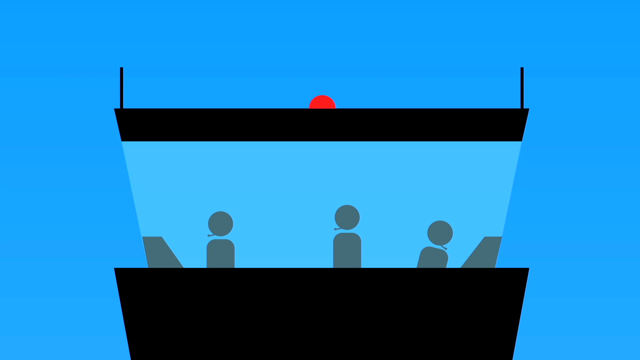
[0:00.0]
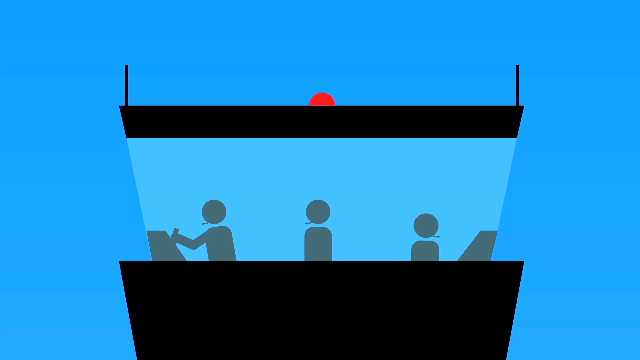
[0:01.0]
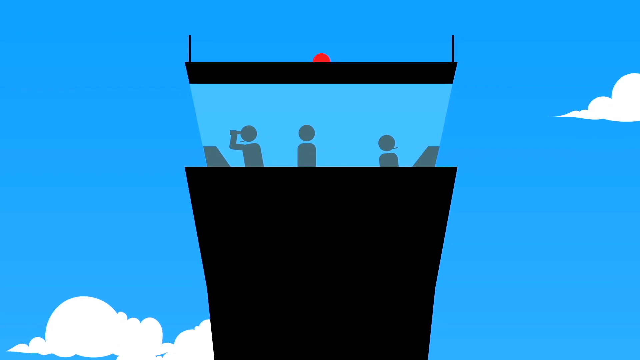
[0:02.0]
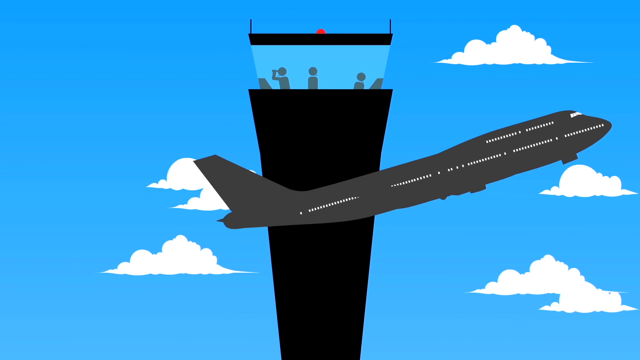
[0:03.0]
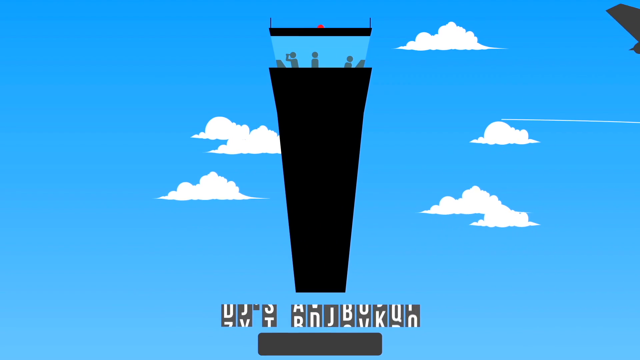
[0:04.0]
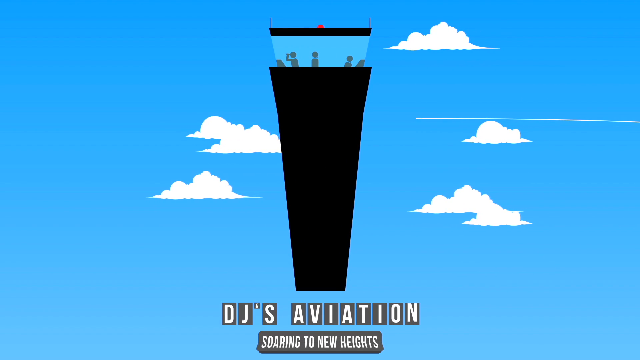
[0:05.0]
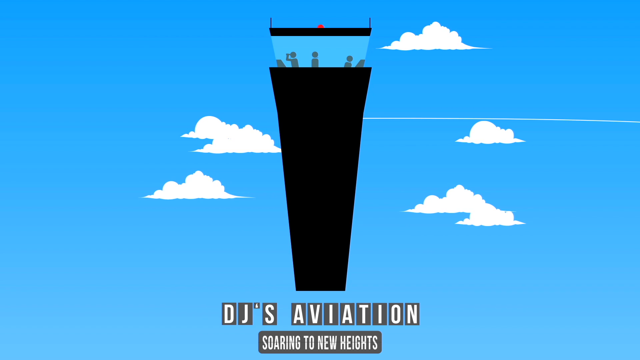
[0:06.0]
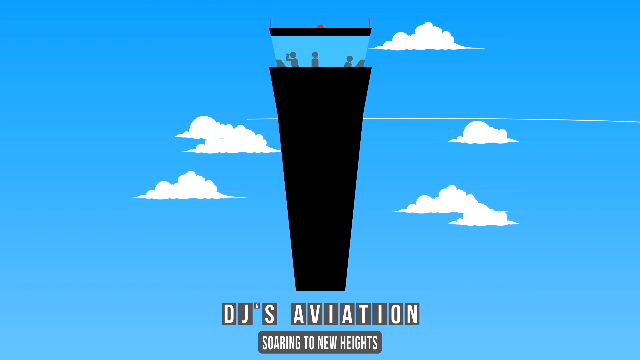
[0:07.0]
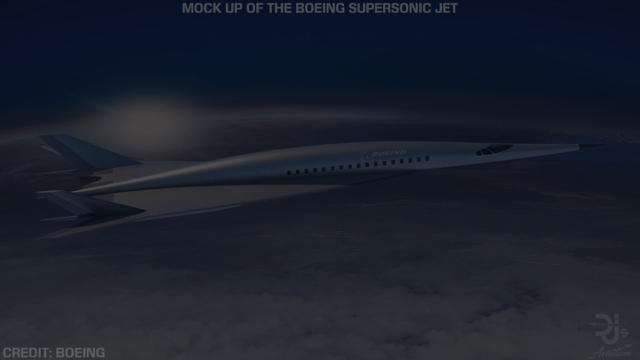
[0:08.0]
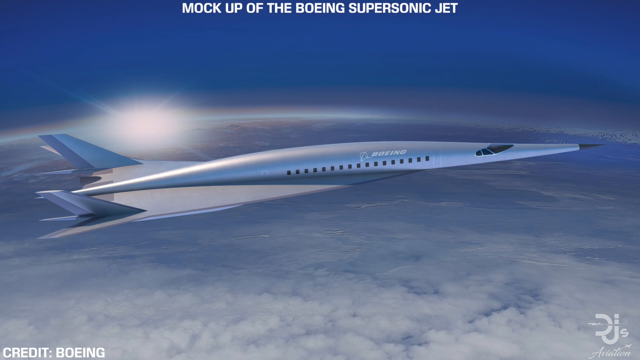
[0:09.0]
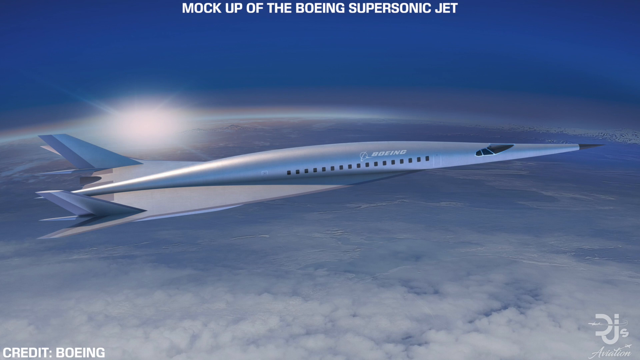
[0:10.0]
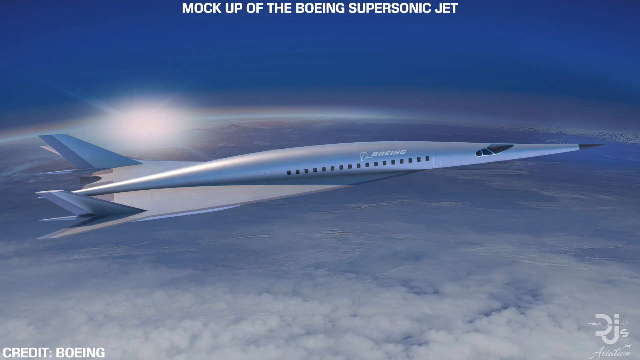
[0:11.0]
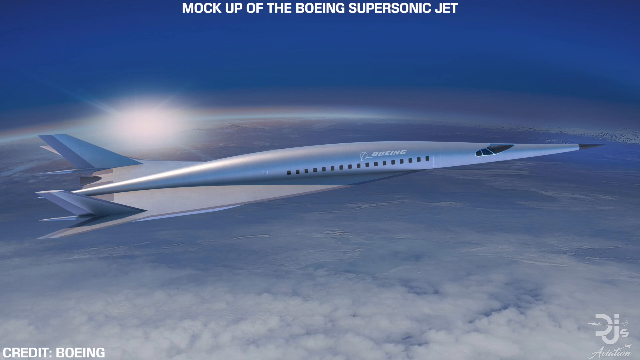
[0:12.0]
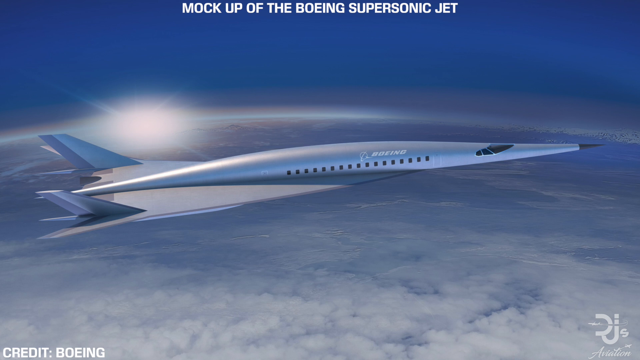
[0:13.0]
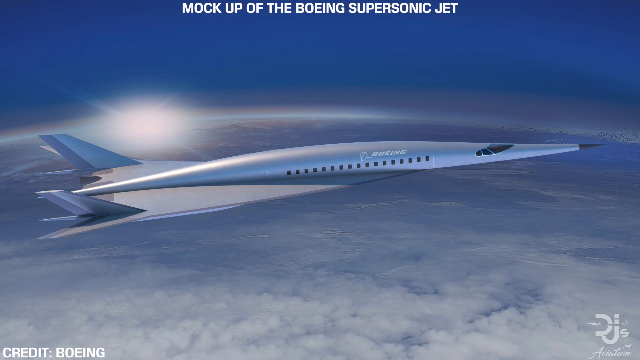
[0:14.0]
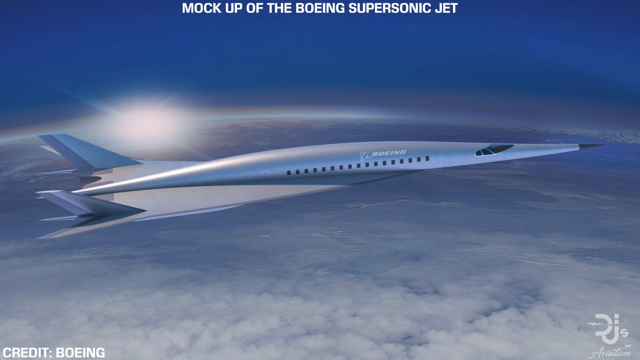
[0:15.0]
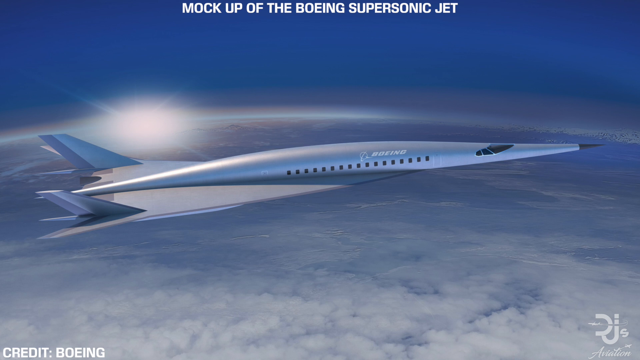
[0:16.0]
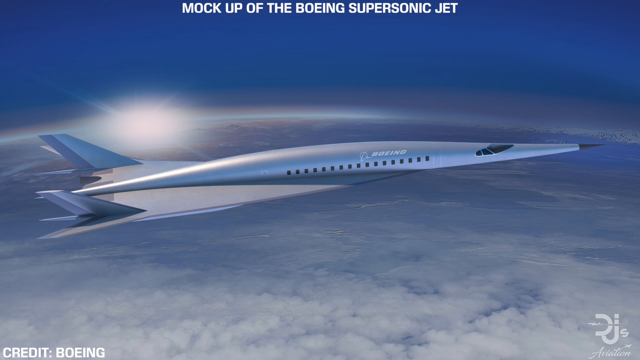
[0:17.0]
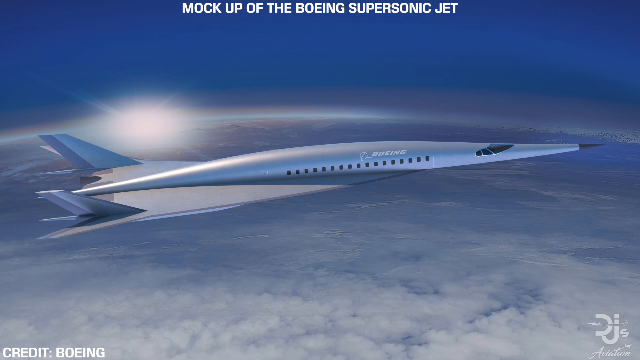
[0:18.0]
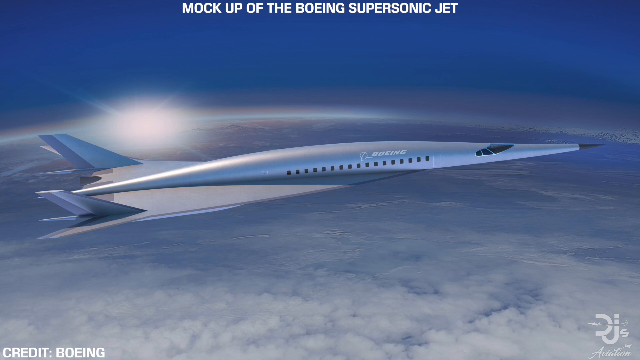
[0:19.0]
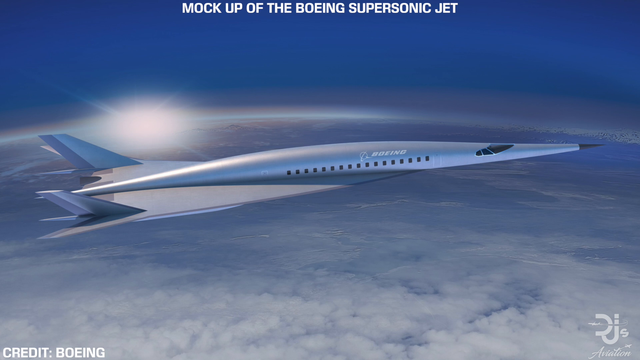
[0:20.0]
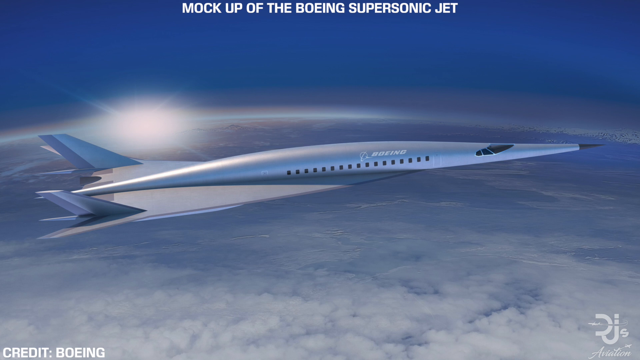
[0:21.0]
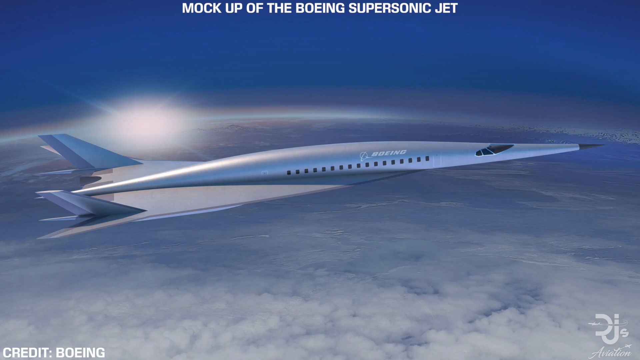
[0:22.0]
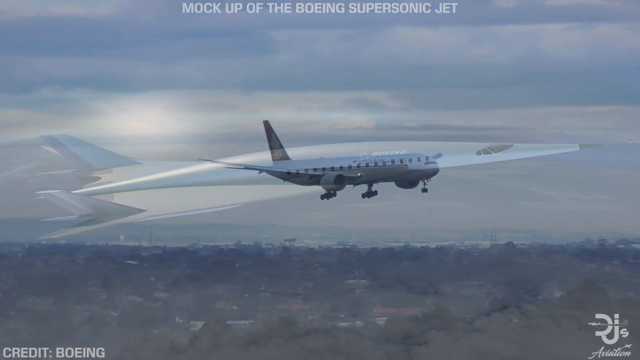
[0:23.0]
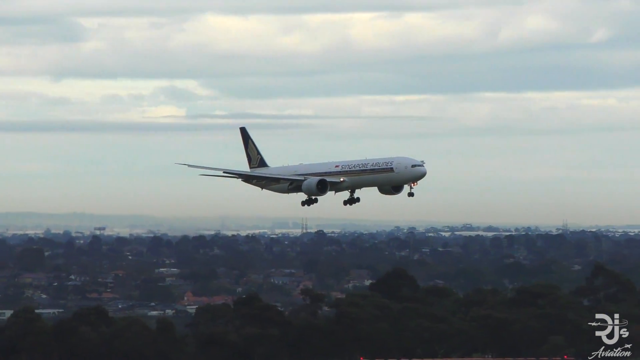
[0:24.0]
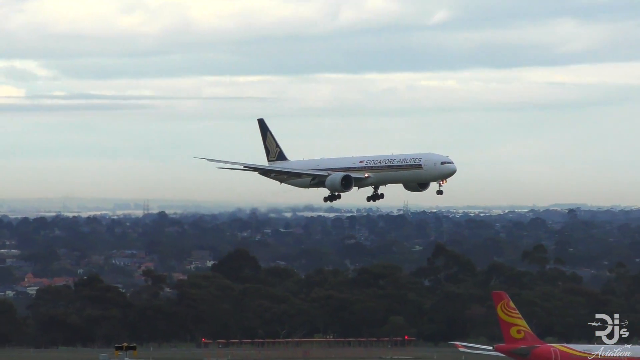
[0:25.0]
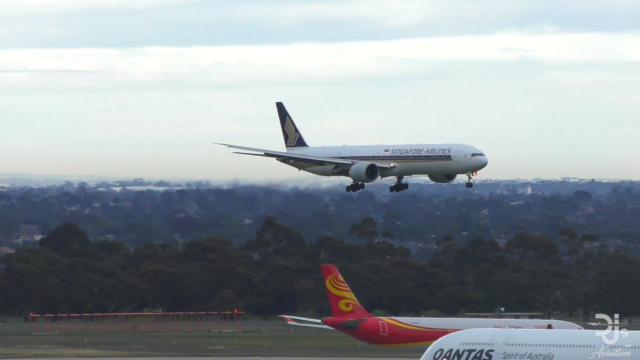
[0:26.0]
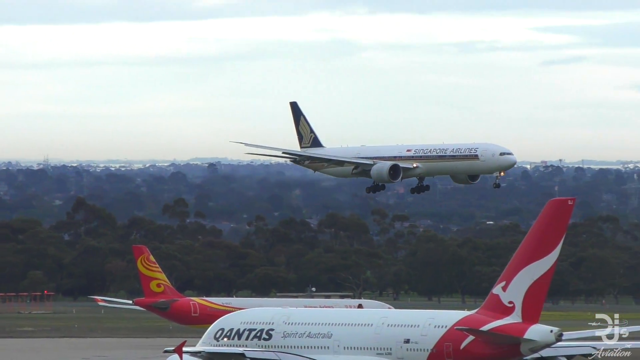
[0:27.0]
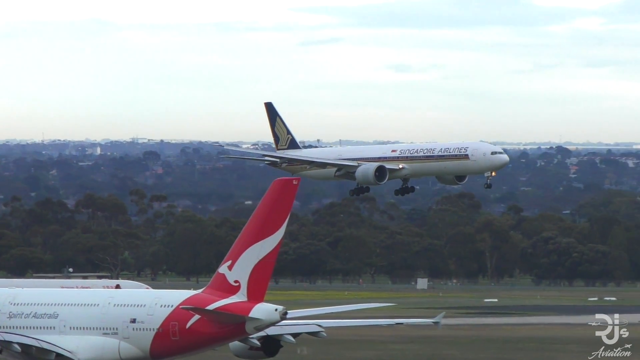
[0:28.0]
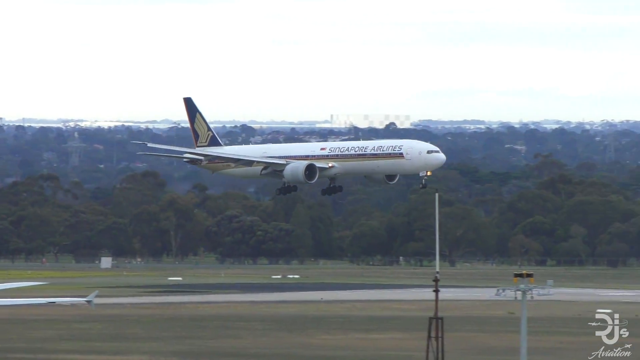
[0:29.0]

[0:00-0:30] A blue screen zooms out to reveal an animated image of a bright blue sky with white clouds in the background. An animated air traffic controller tower appears, with what looks like a silhouette of animated figures inside it, and an animated airplane flies by the tower. A title screen reads "DJ's Aviation." Next comes a painting of the Boeing supersonic jet, with text reading "mock-up of the Boeing supersonic jet." The jet is very long and thin with a pointed nose and is shown flying high above the Earth. Real-life footage follows of a large passenger jet that appears to be landing at an airport; its wheels come down and it lands on the runway.